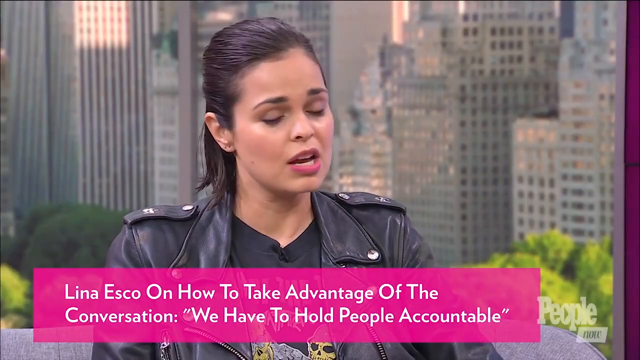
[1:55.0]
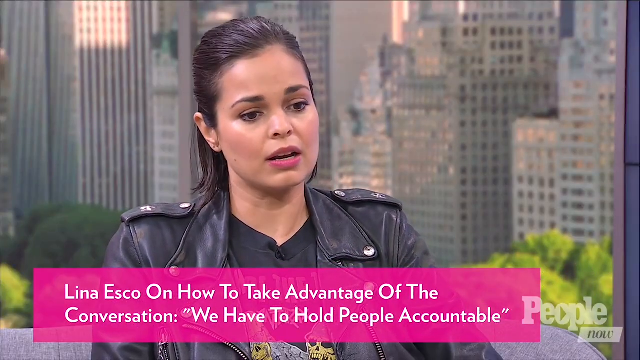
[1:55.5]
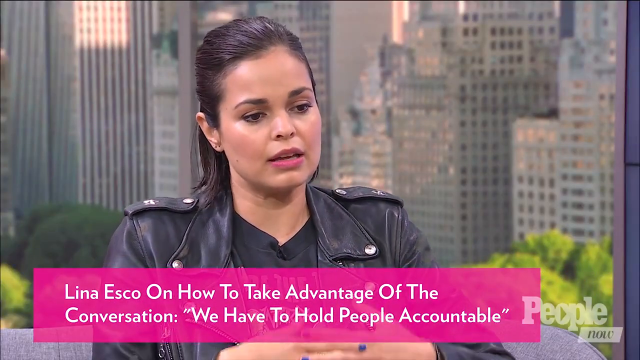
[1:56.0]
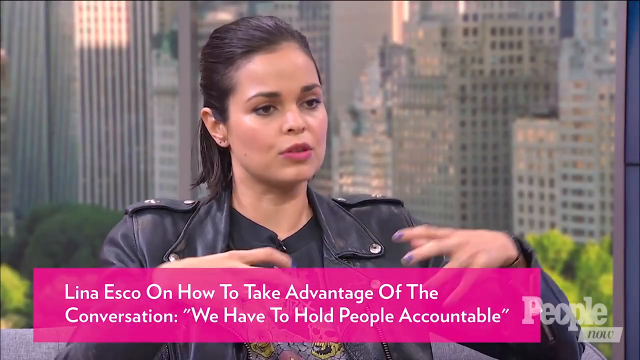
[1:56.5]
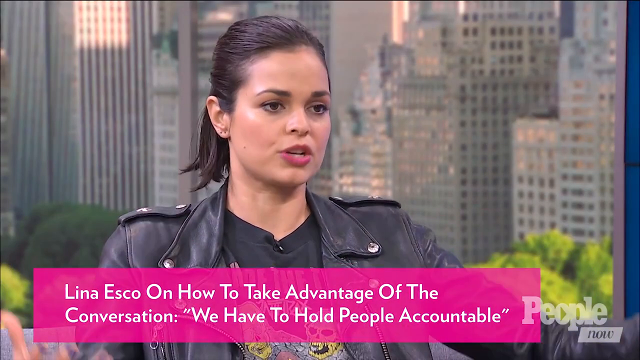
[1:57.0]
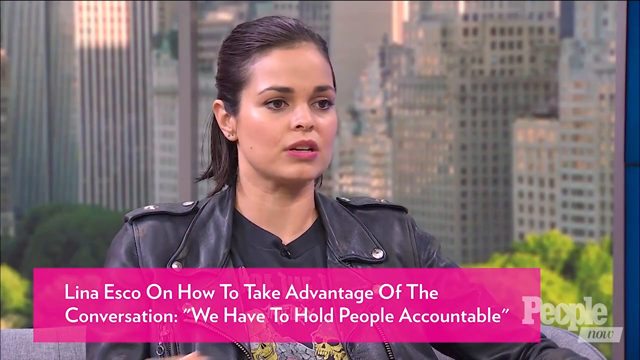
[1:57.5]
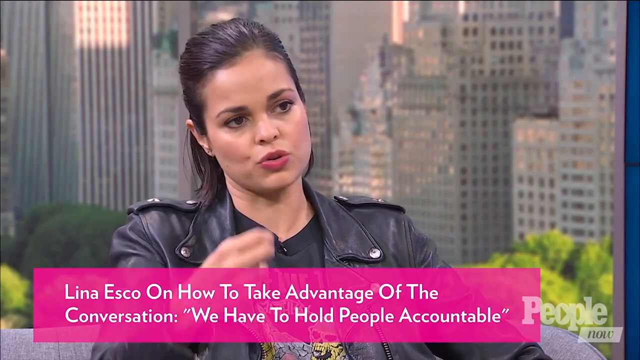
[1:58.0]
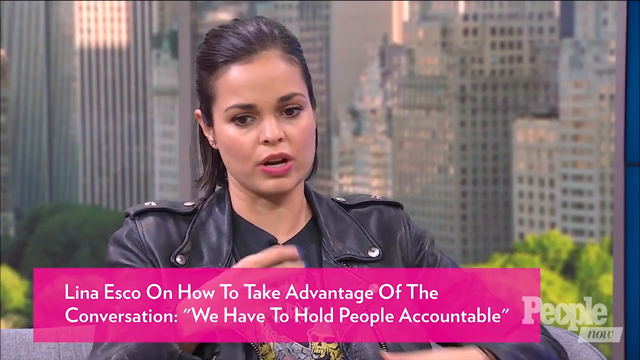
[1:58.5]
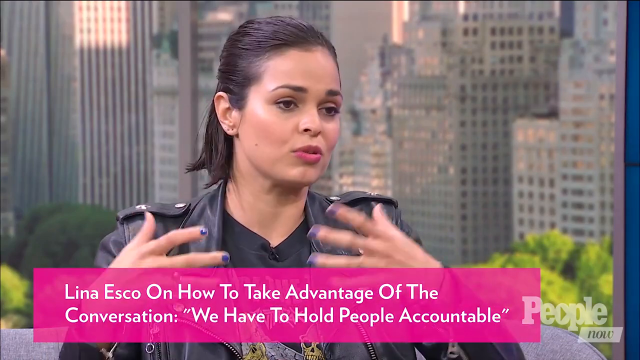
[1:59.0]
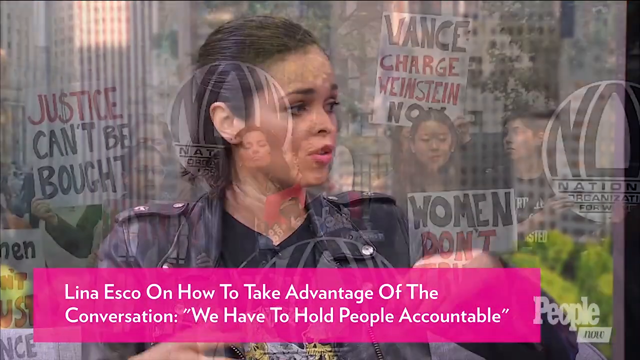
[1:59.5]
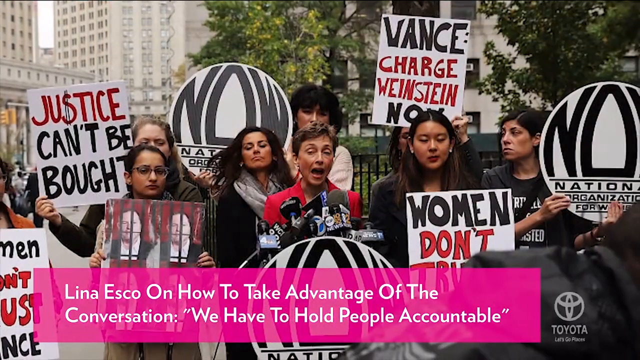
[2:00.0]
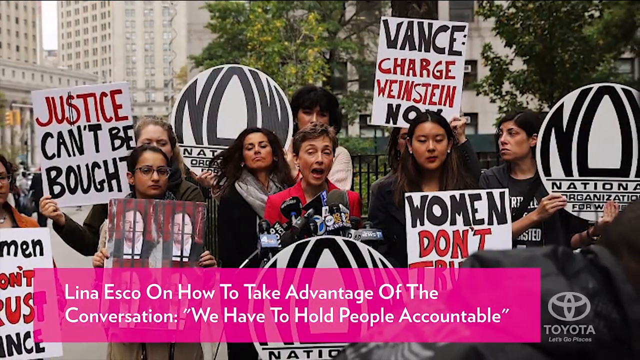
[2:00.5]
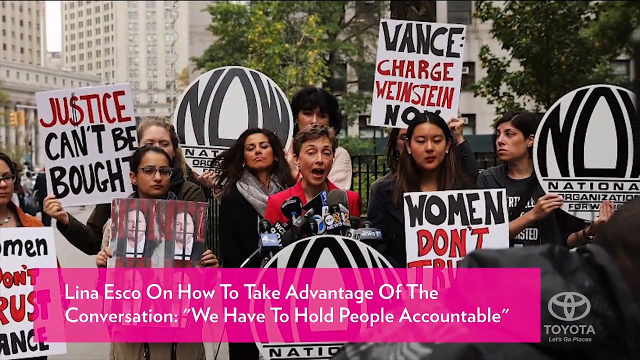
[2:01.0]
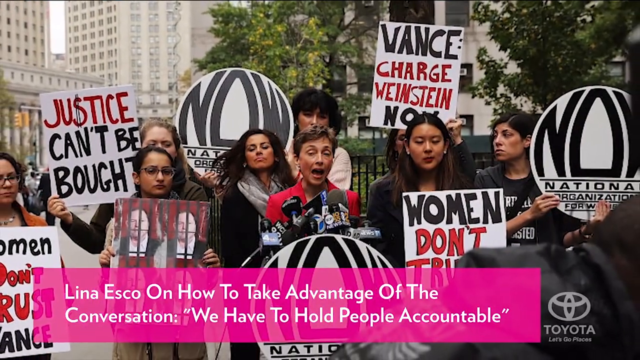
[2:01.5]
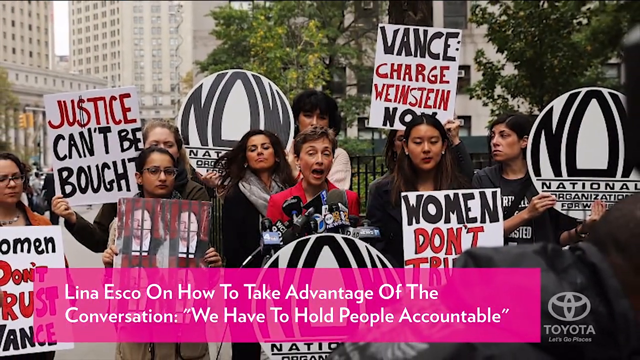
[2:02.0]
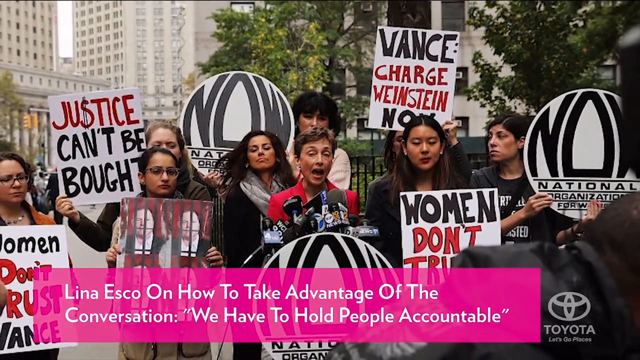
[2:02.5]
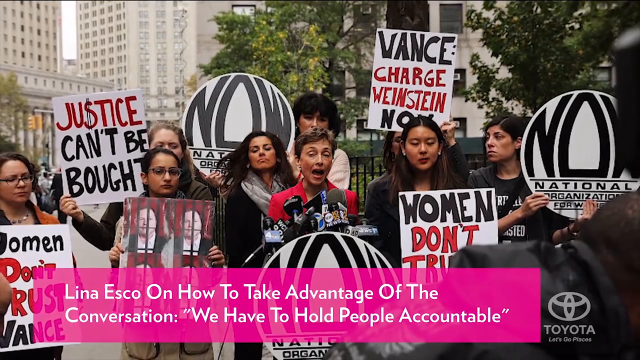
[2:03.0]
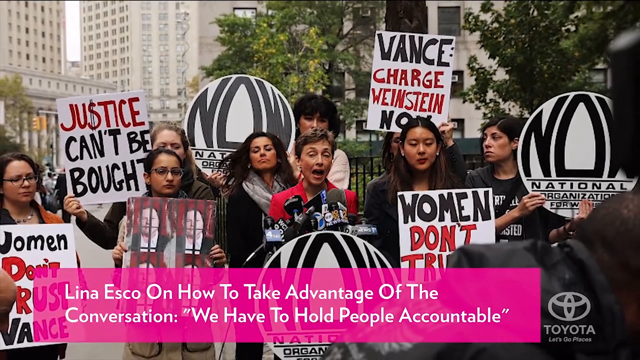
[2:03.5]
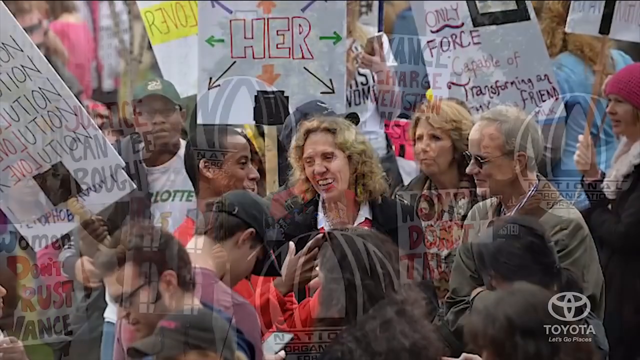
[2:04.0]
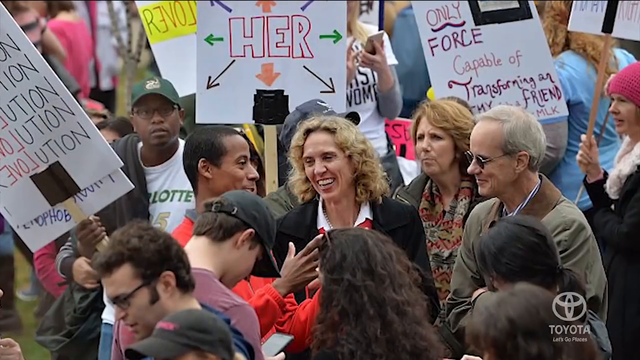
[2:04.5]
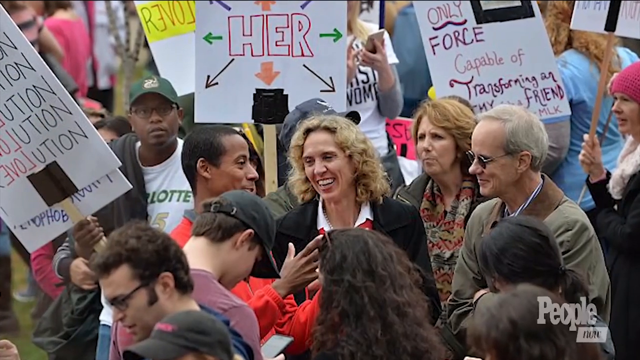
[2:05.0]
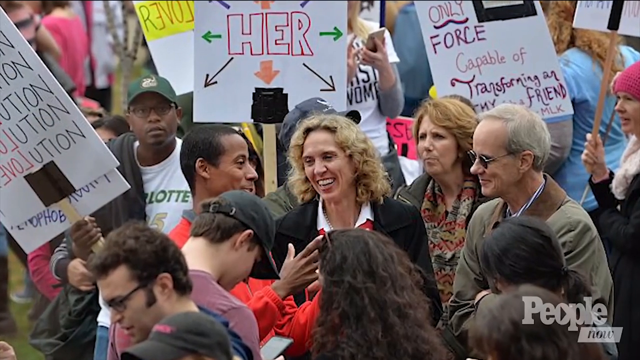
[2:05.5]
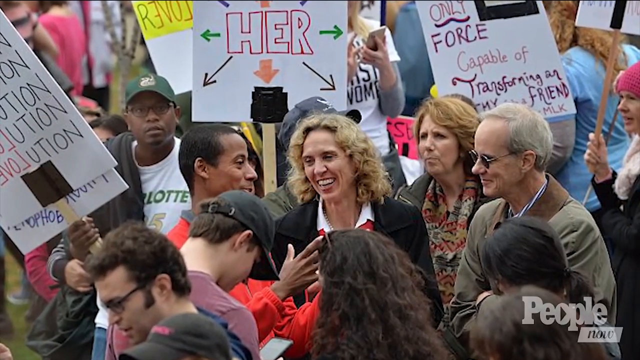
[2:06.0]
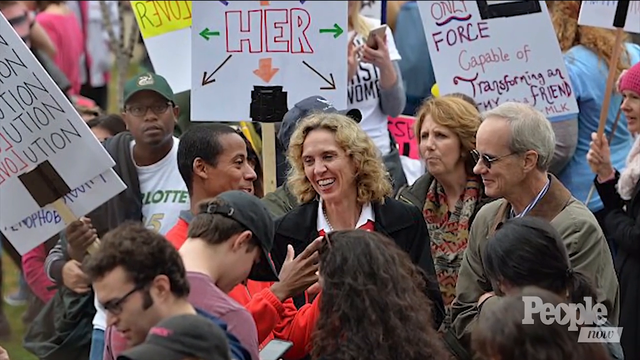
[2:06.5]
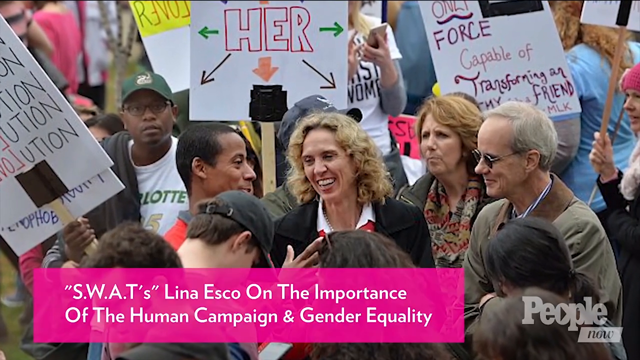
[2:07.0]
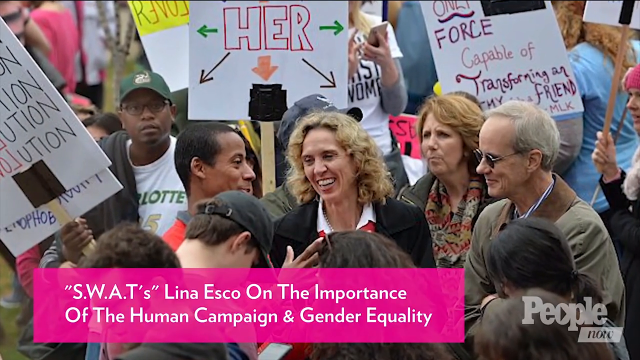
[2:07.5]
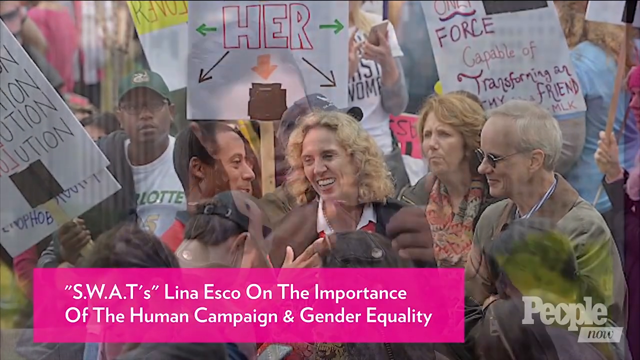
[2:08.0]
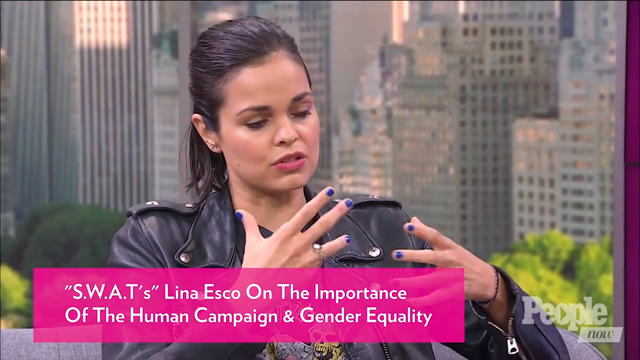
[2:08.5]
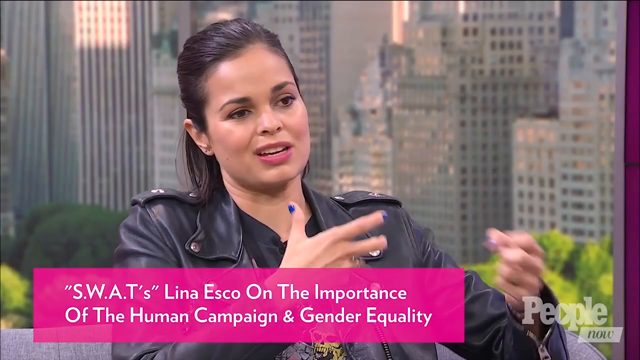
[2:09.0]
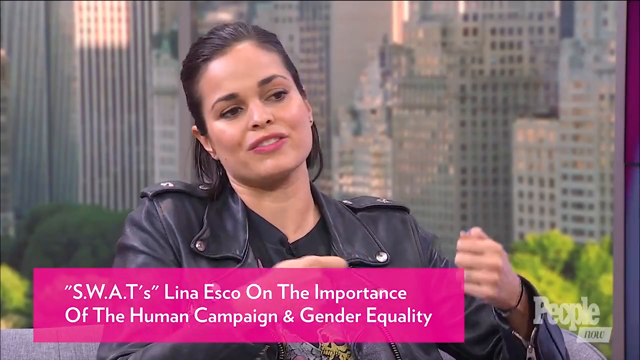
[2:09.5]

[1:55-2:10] The woman in the leather jacket is still talking, and then the video moves to other scenes of crowds and groups of people protesting, holding up cards with various slogans written on them; one card reads "National Organization for Women". Someone on a stage speaks into a mic. On-screen text reads "Lina Esco on how to take advantage of the conversation" and "We have to hold people accountable". The video then returns to the actress talking and explaining.